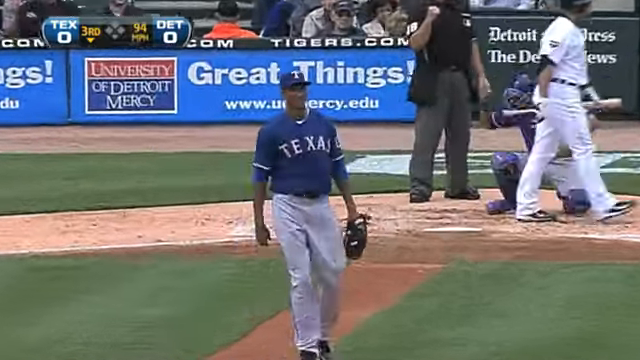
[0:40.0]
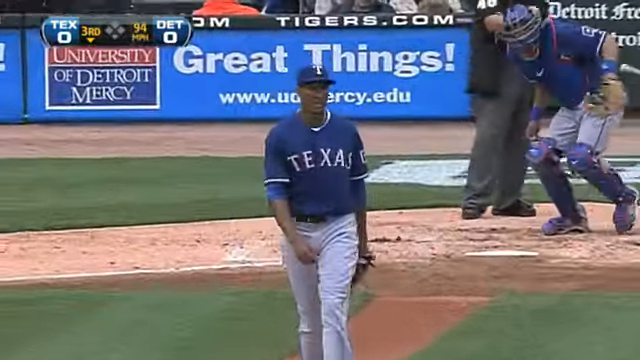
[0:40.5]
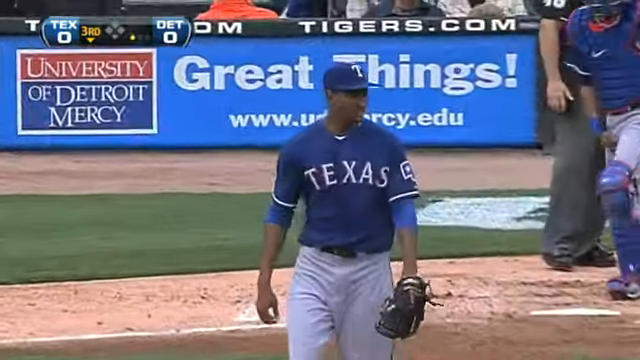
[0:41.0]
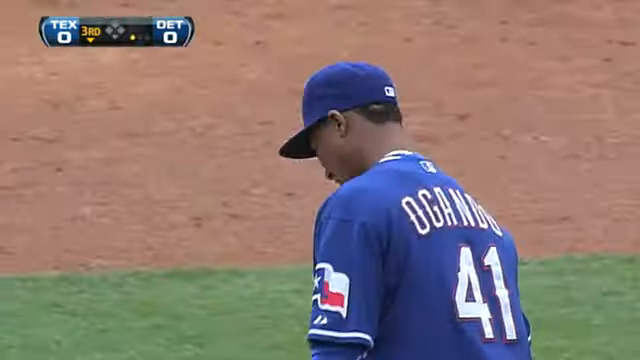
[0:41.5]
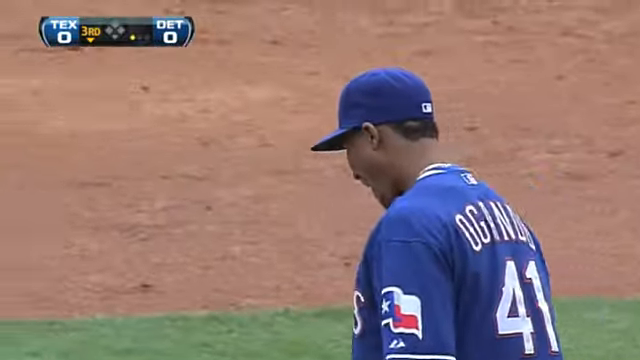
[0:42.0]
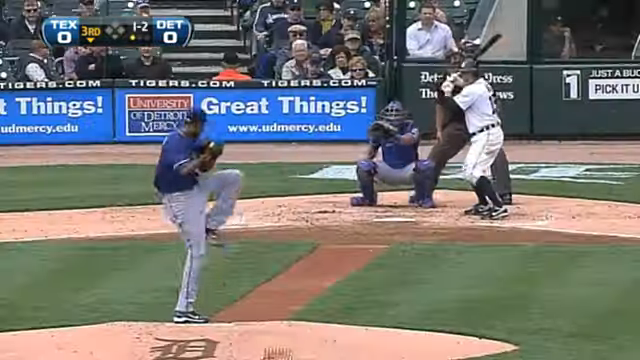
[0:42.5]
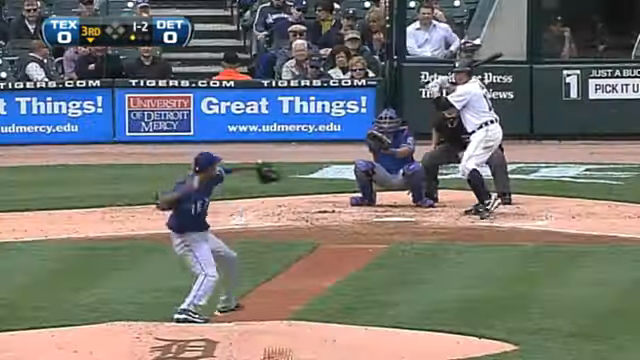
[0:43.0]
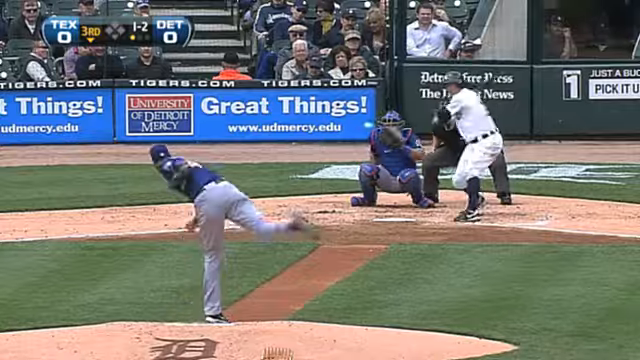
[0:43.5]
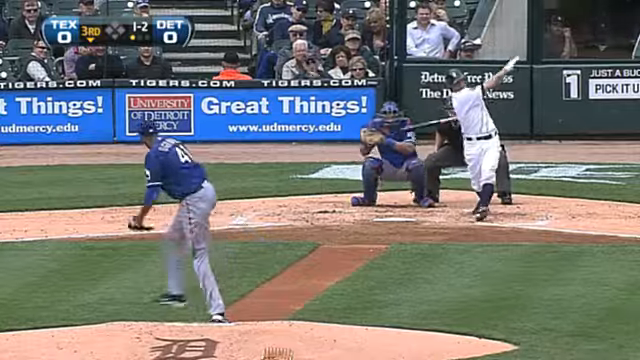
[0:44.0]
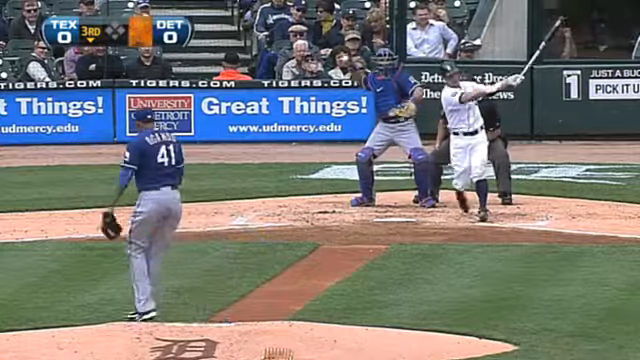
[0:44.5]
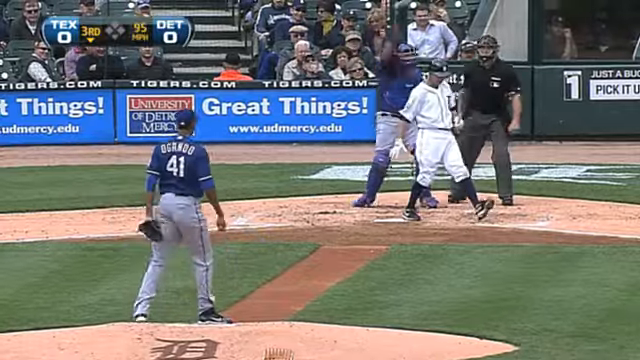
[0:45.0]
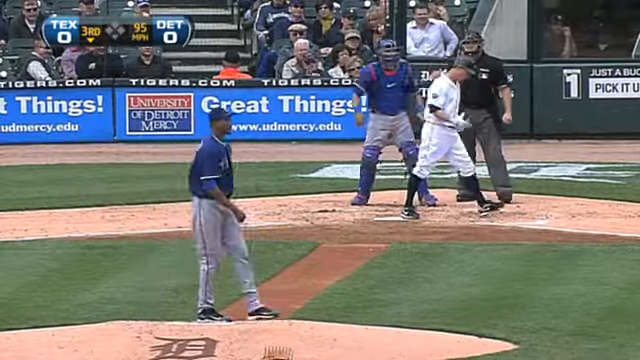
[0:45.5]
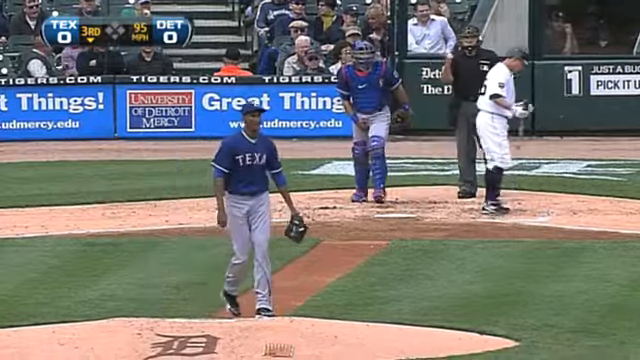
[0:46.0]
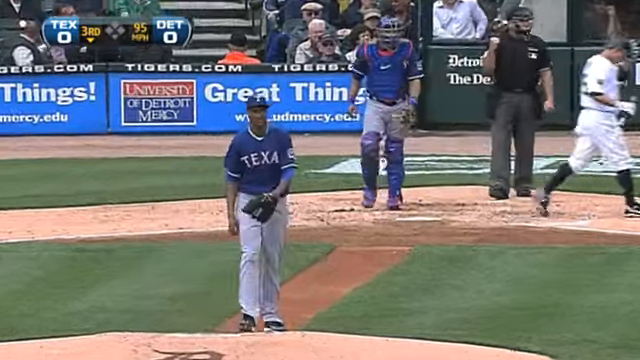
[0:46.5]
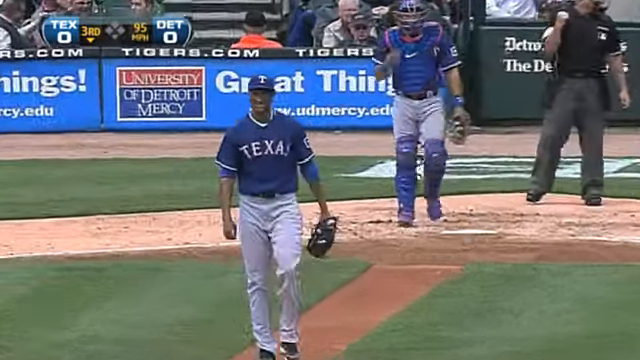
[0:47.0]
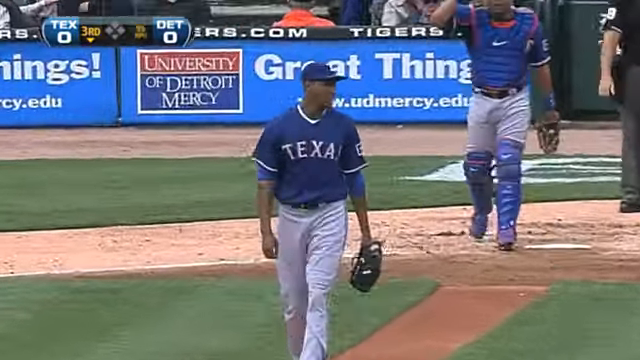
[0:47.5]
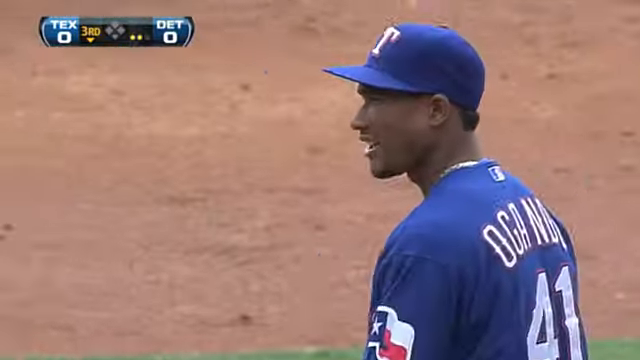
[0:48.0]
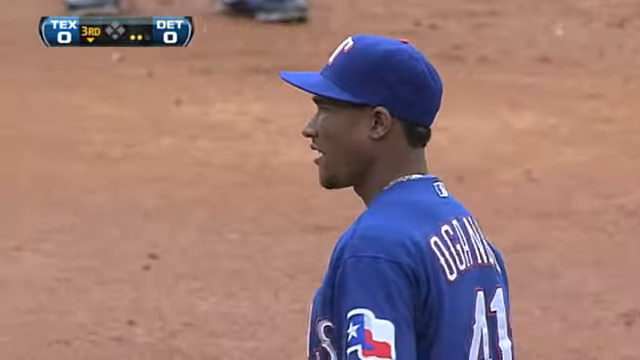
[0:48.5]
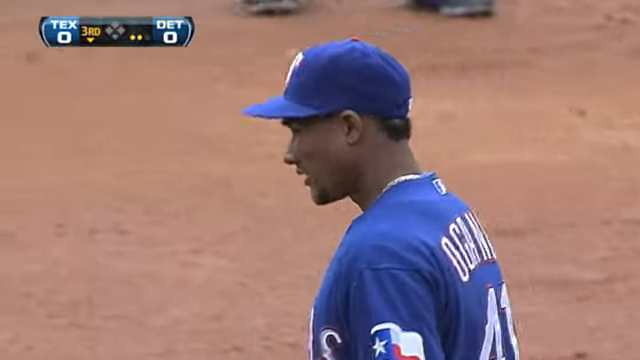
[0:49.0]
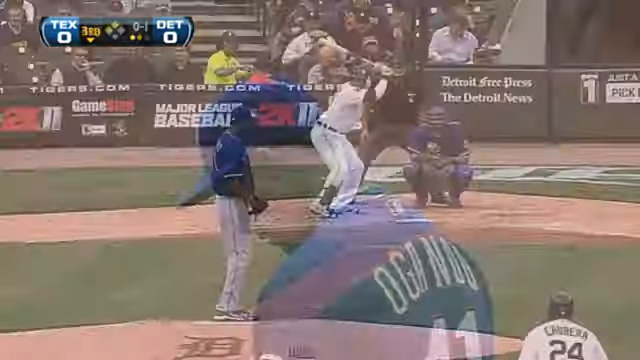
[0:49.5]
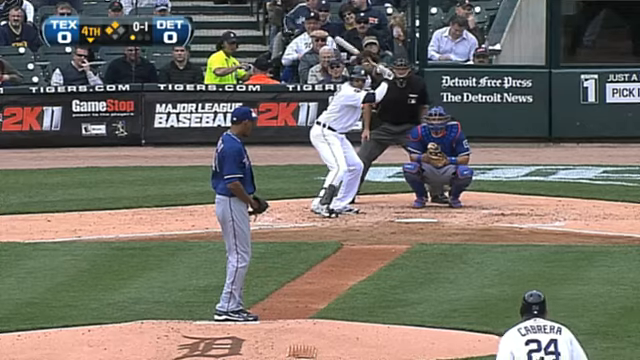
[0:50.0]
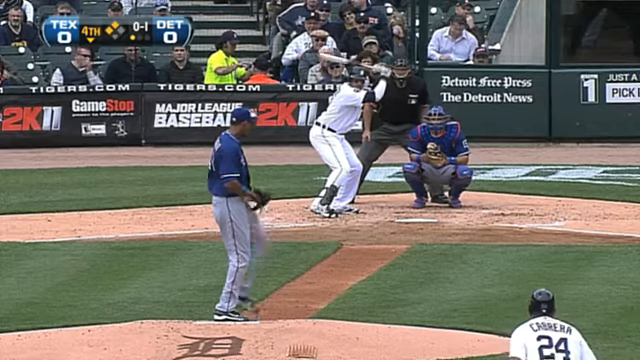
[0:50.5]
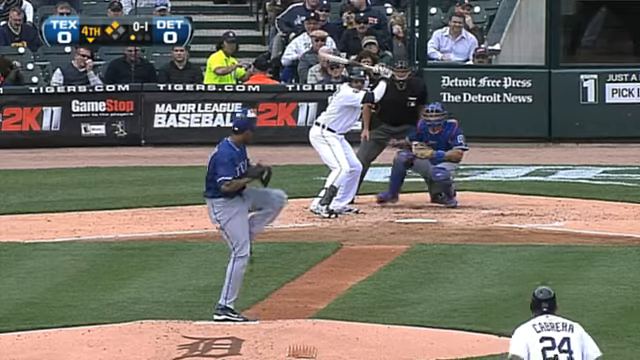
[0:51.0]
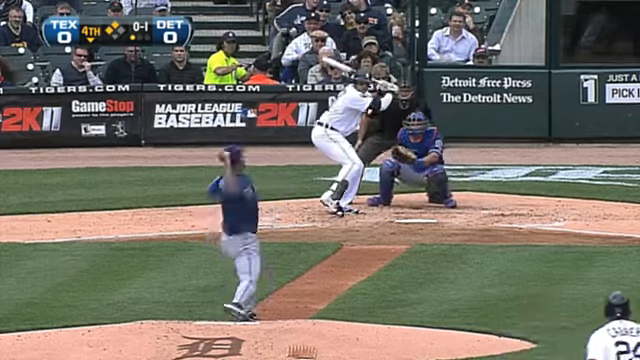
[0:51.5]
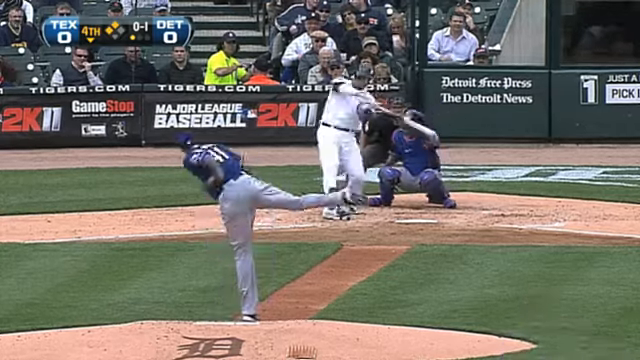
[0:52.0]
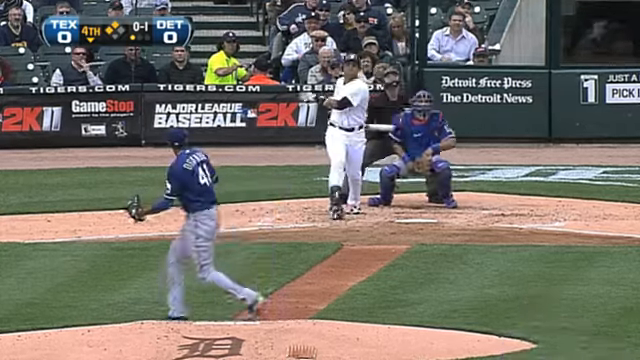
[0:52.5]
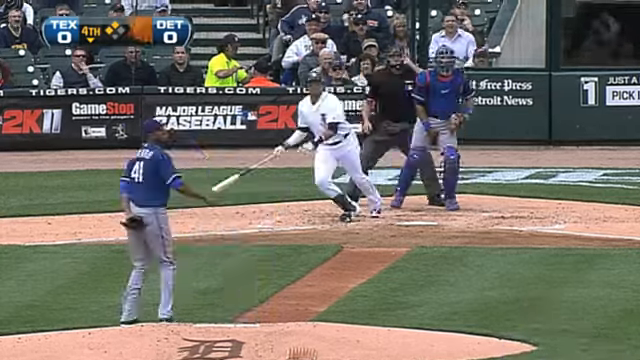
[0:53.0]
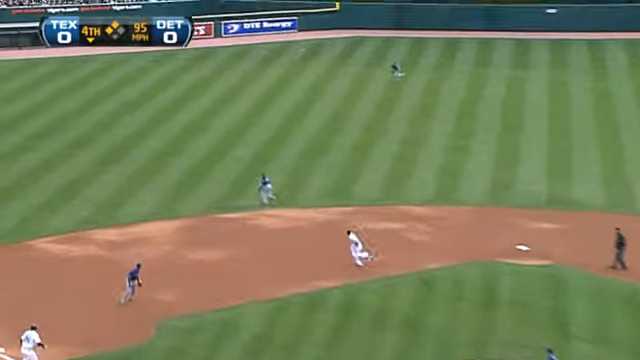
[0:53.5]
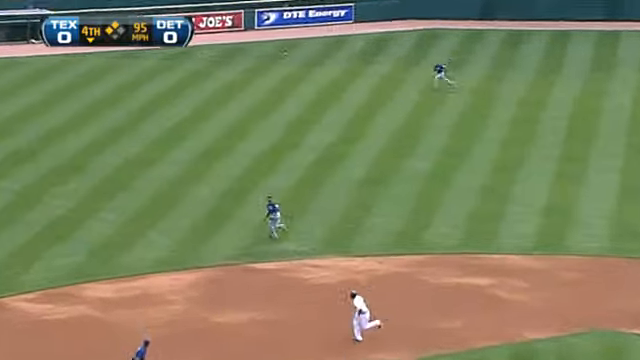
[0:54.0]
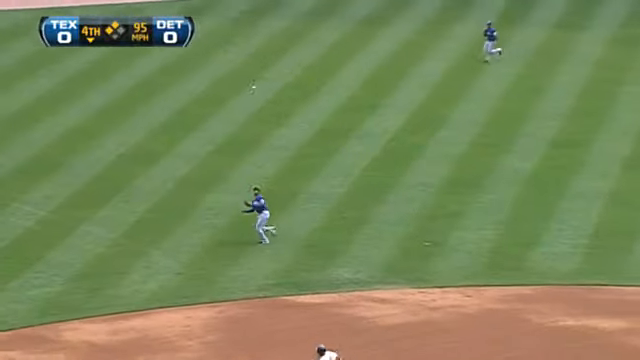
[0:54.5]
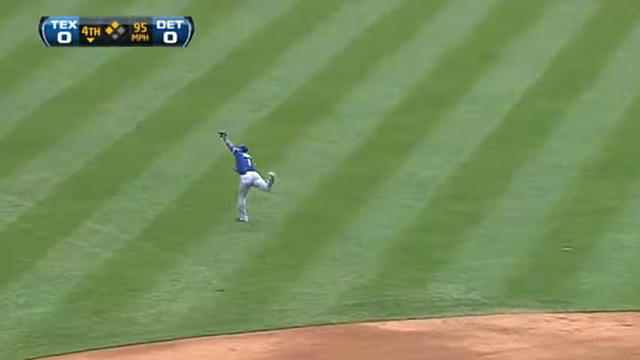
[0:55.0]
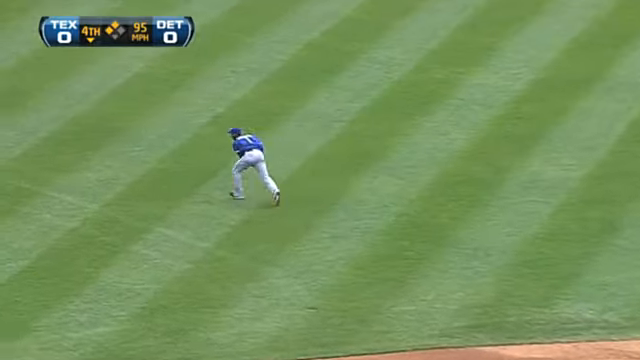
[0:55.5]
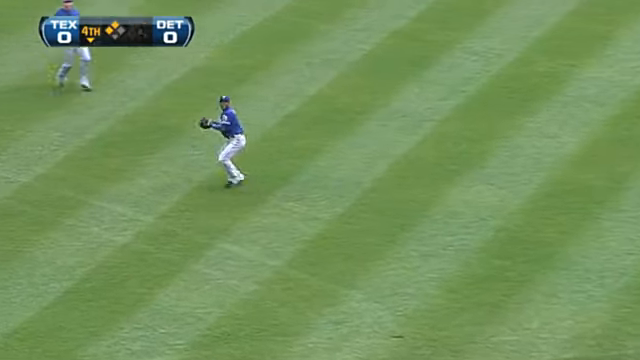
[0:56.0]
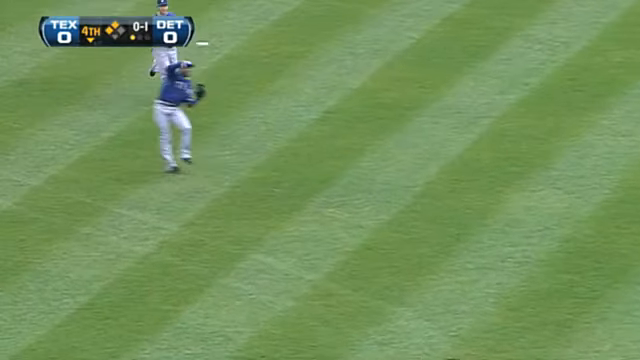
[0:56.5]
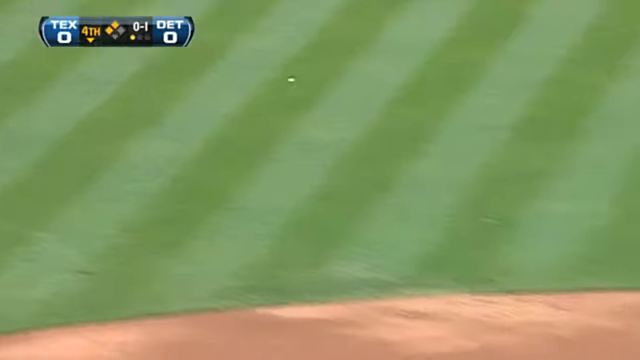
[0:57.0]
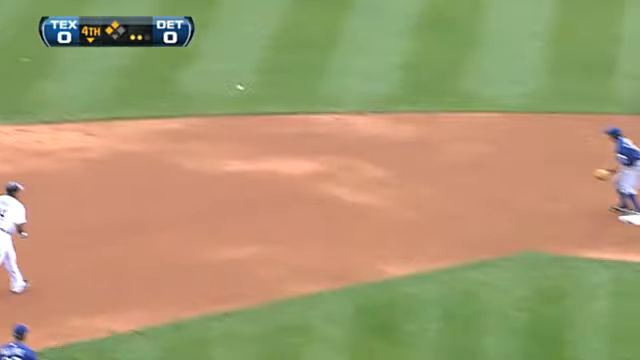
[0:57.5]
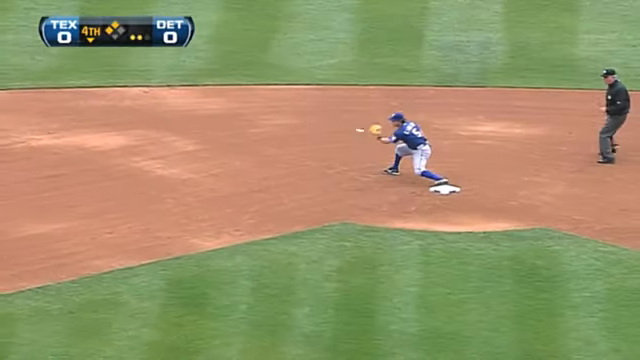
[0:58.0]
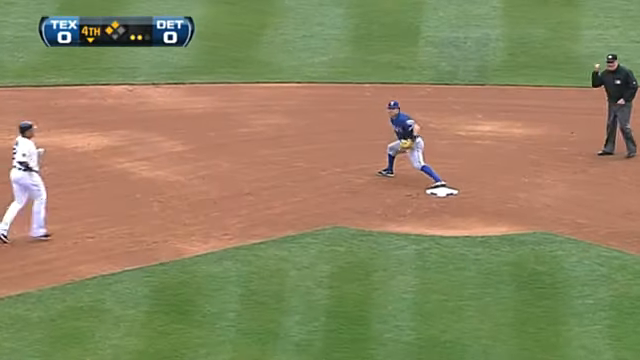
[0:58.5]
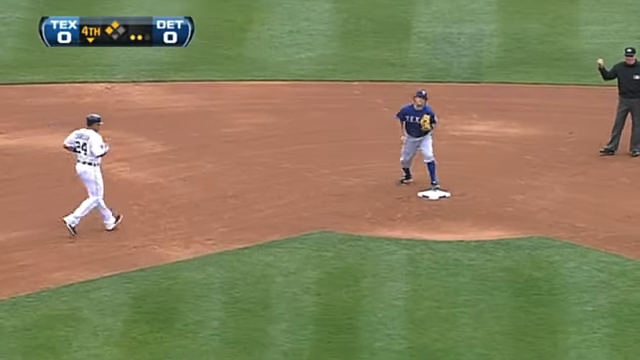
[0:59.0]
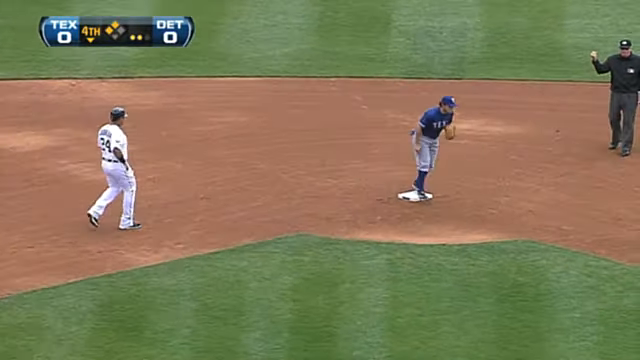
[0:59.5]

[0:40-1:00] Ogando strikes out another Detroit Tigers batter. The billboard behind the batter reads "great things are coming at the University of Detroit Mercy", and a billboard for the Detroit Free Press is in the upper right portion of the screen. It is the bottom of the third inning, and Ogando has just thrown a 94-mile-an-hour split-finger fastball to retire the Tiger batter. He walks away from the mound, then pitches to the next batter, number 15, who swings and misses for another strikeout. Ogando smiles and pitches again. The ball is hit high in the air to deep shortstop. The shortstop gets it and throws to second to double up the runner, who thought it was a hit and did not tag up.